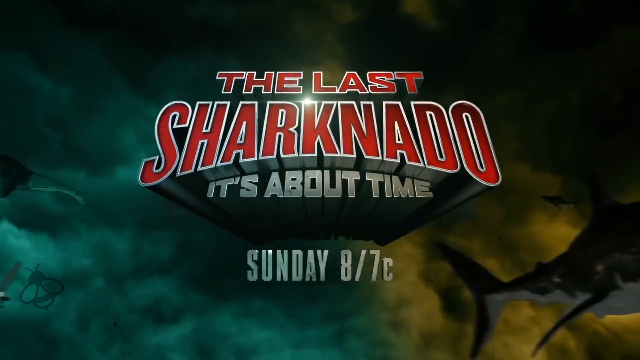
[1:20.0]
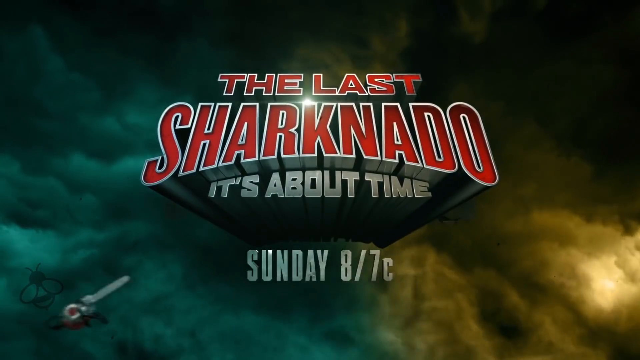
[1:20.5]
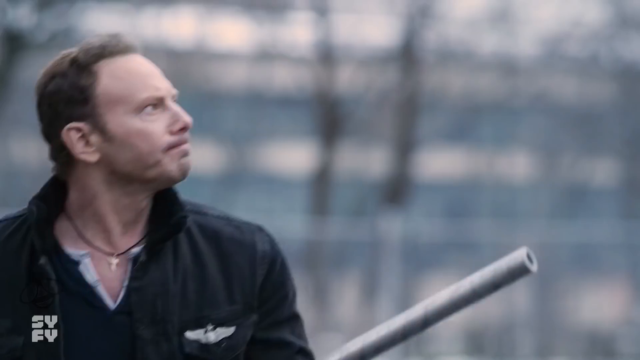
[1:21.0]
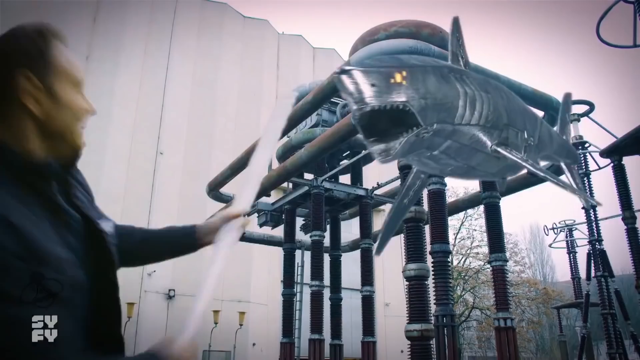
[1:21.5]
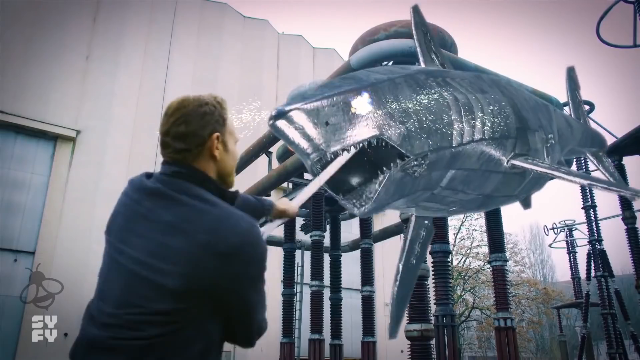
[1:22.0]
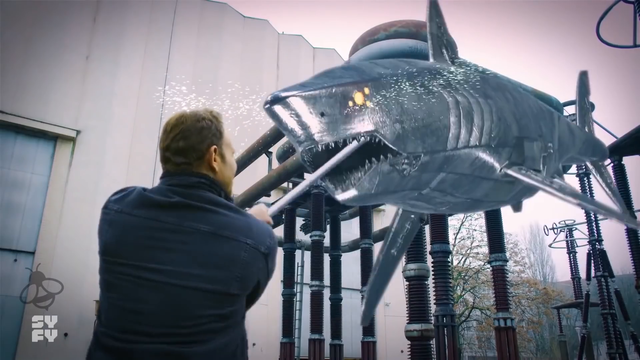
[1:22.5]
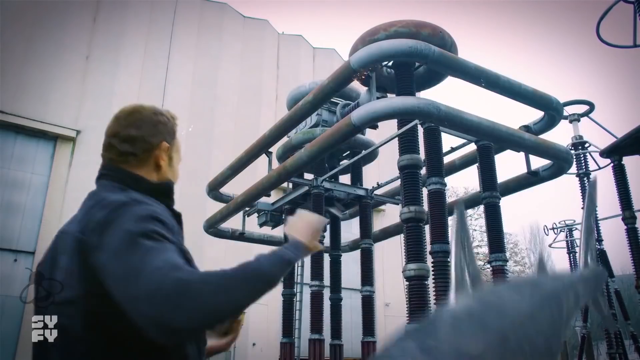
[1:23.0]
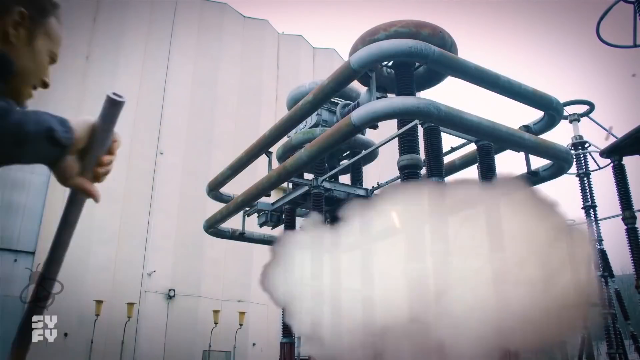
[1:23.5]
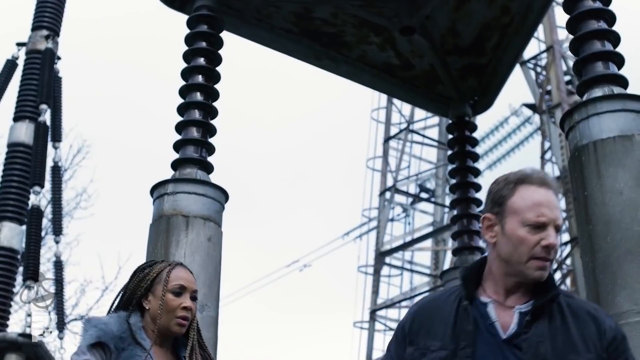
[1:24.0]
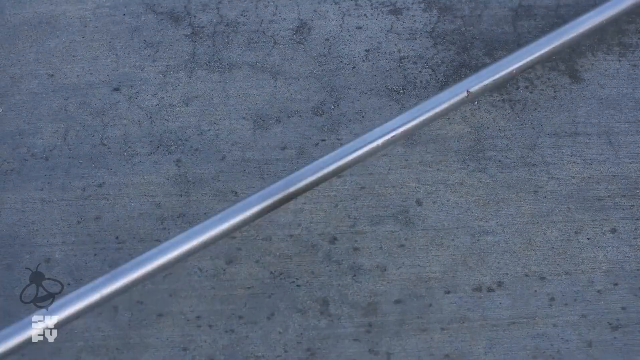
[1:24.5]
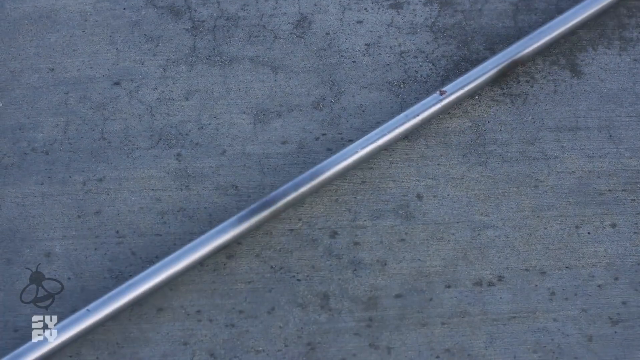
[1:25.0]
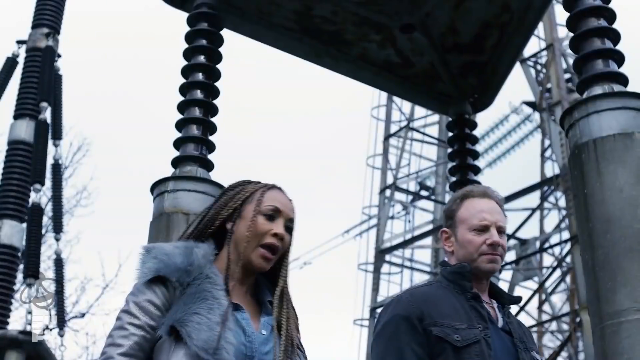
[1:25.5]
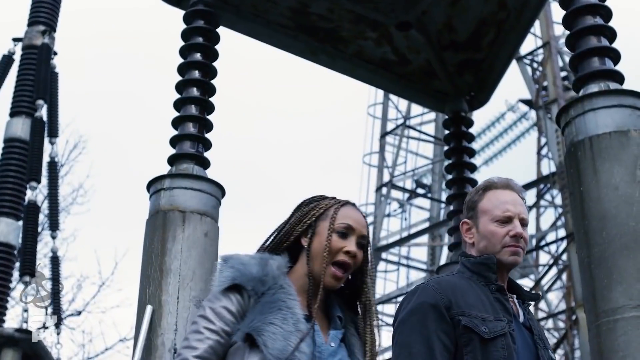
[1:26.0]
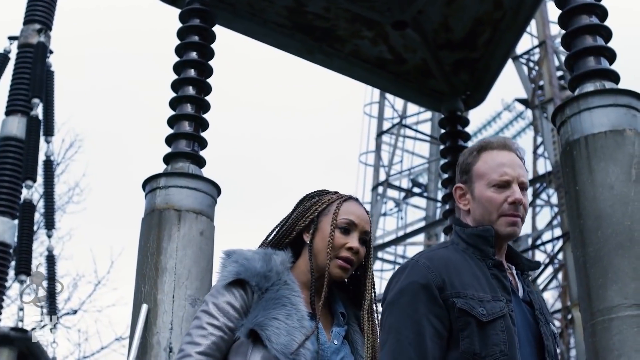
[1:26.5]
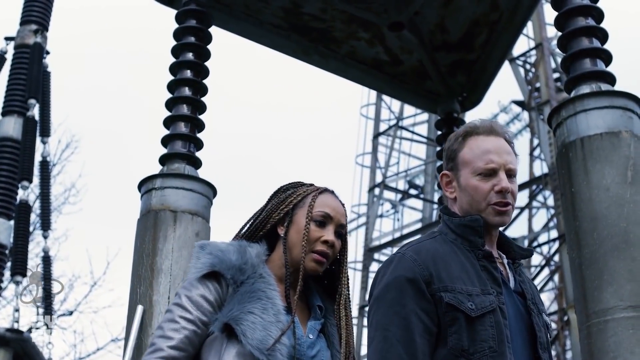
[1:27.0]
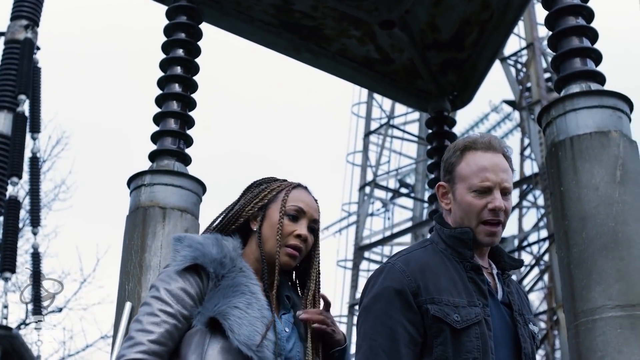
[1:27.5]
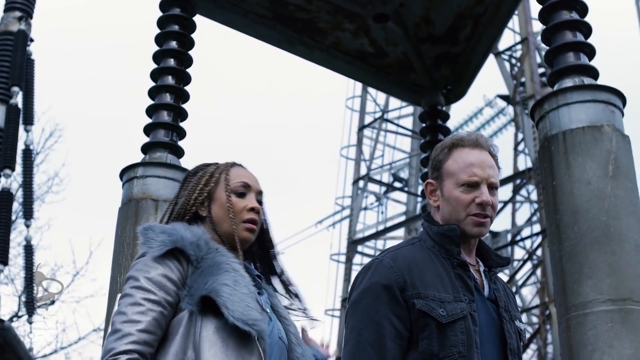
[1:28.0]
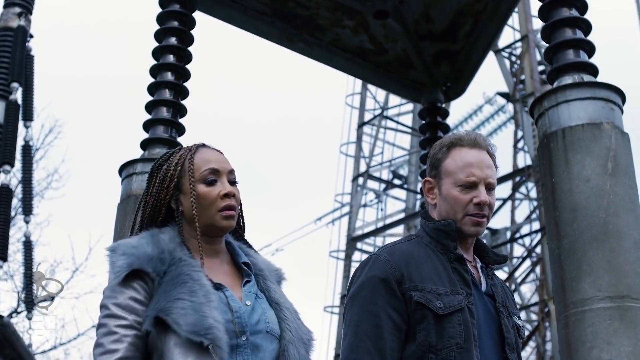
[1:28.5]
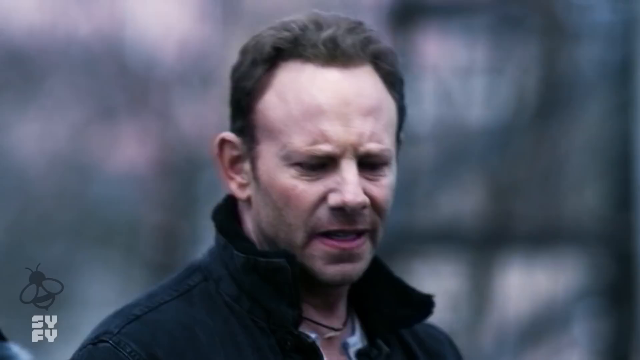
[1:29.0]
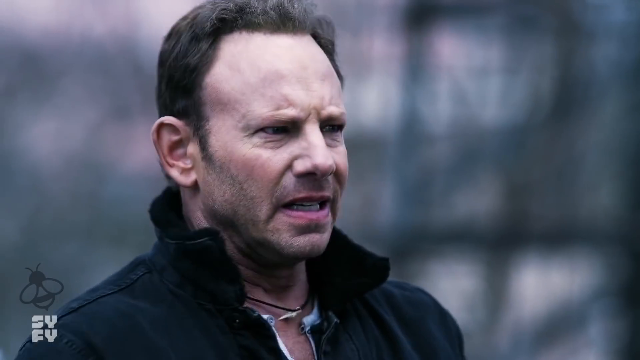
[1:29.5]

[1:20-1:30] The title screen reads "The last Sharknado, it's about time," followed by the tornado of sharks. A man puts a metal rod into a shark made fully of metal, stopping it. They are at an electricity plant; the man drops the metal, and the characters converse back and forth.